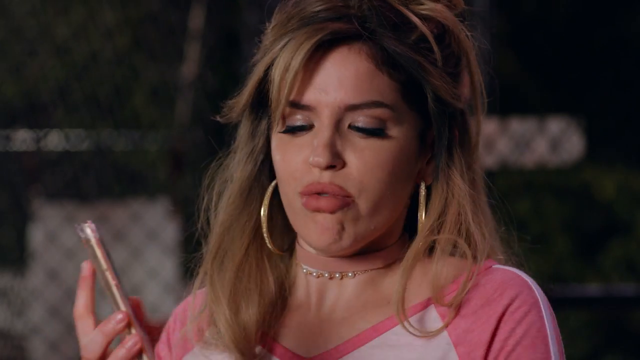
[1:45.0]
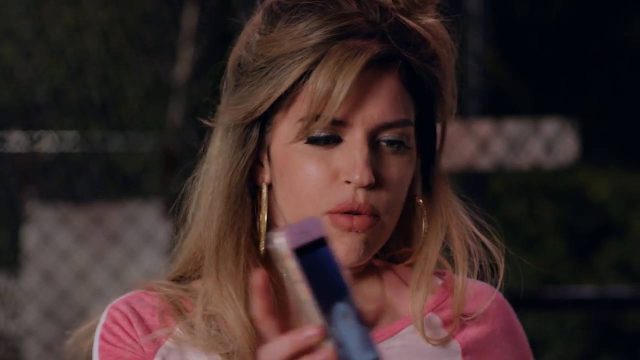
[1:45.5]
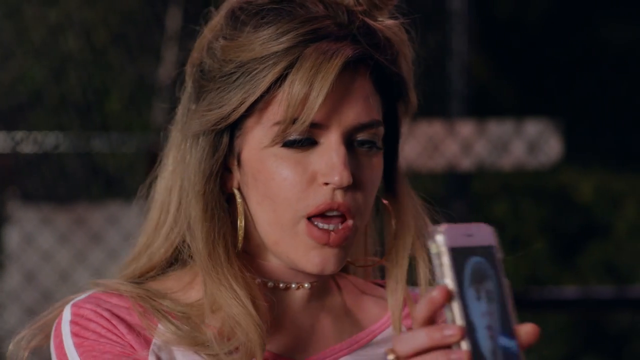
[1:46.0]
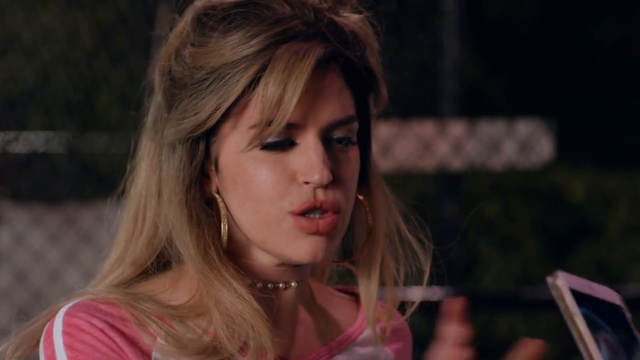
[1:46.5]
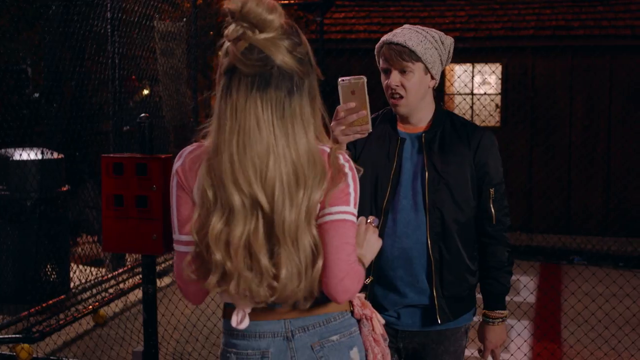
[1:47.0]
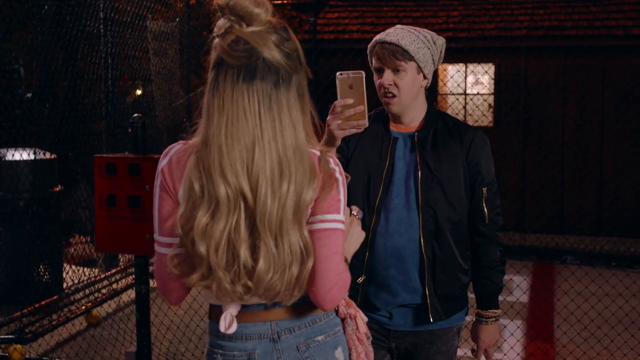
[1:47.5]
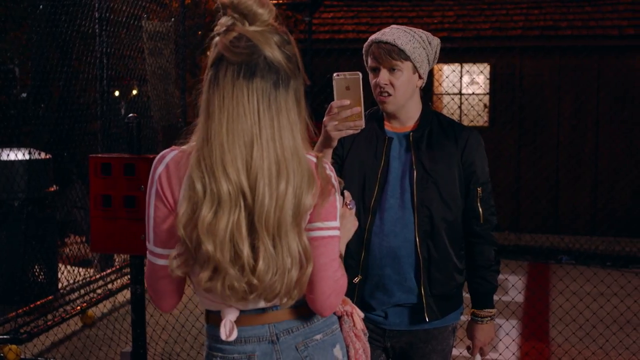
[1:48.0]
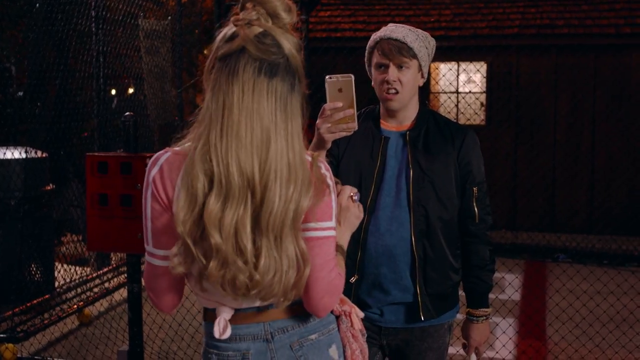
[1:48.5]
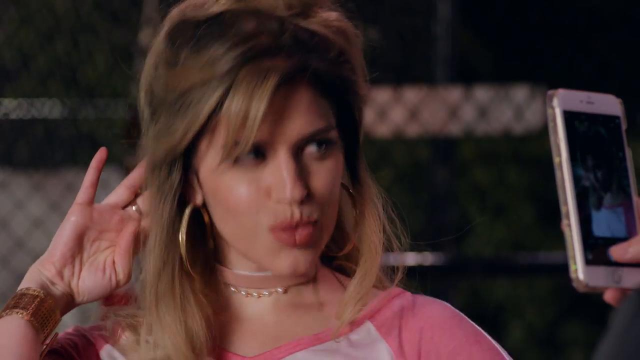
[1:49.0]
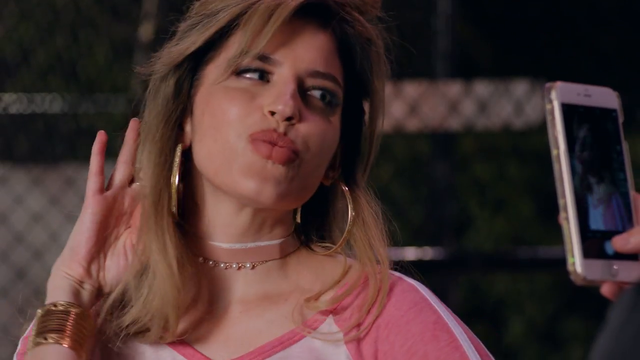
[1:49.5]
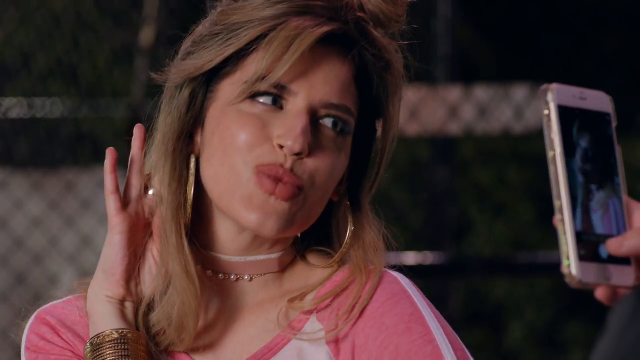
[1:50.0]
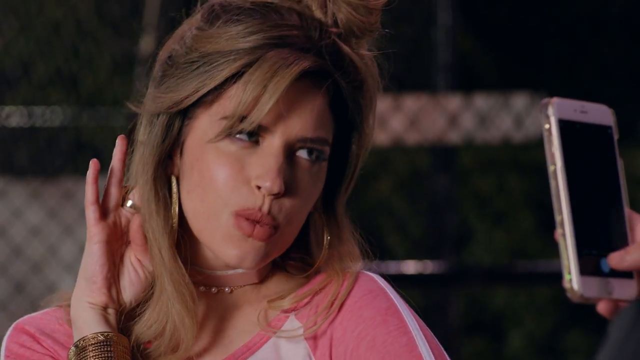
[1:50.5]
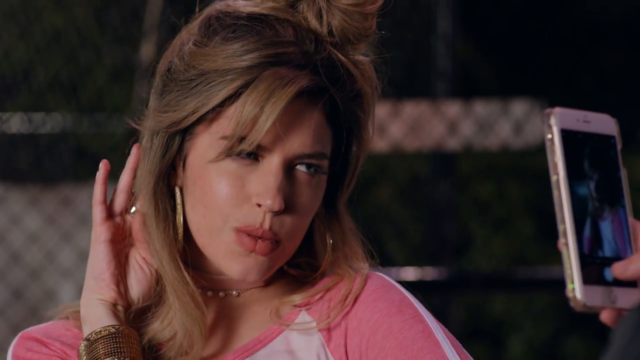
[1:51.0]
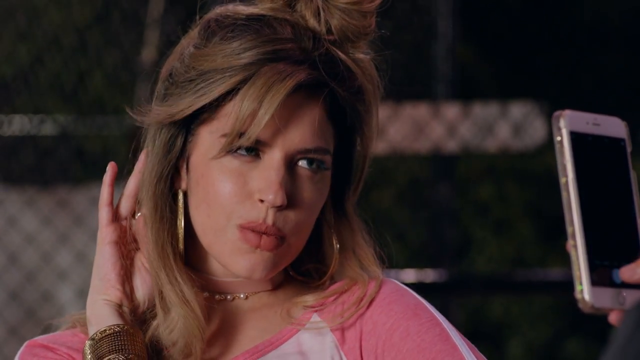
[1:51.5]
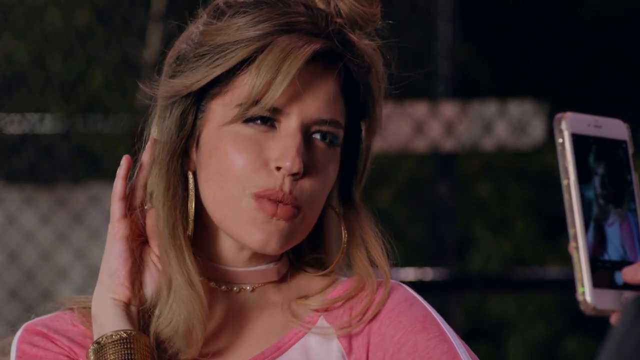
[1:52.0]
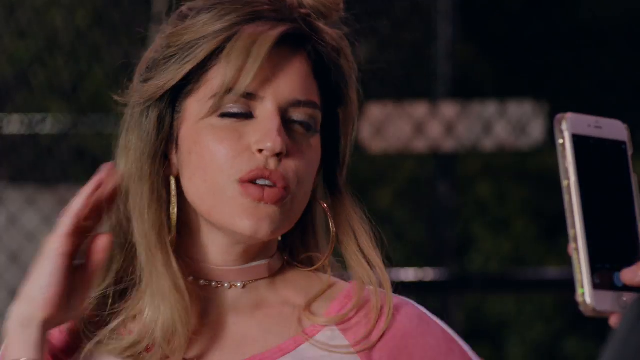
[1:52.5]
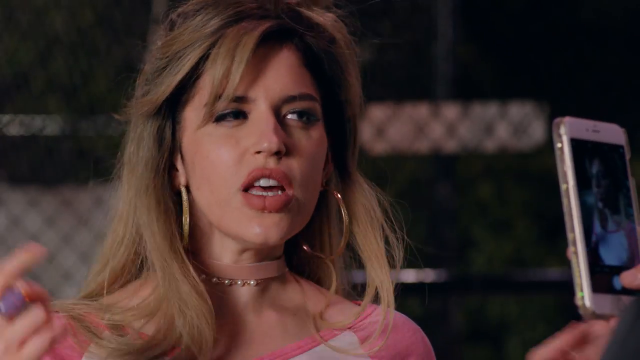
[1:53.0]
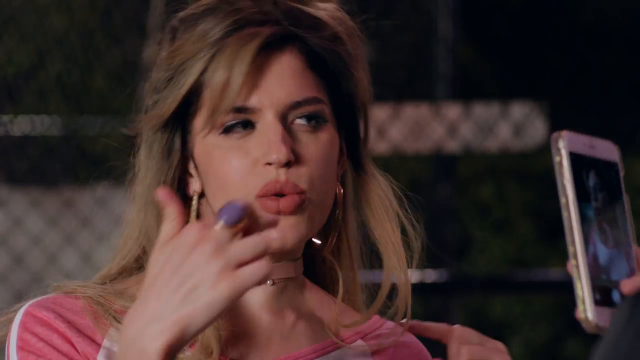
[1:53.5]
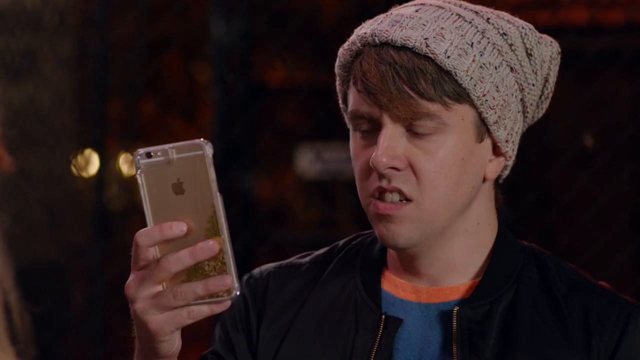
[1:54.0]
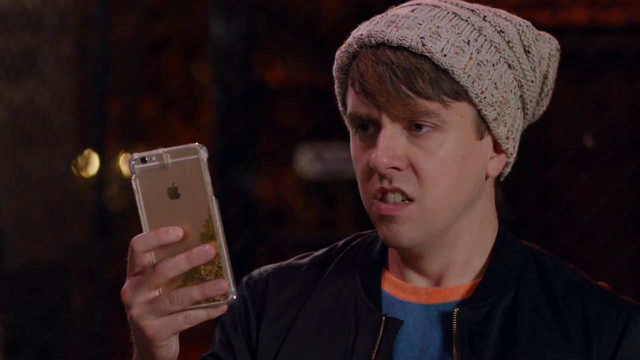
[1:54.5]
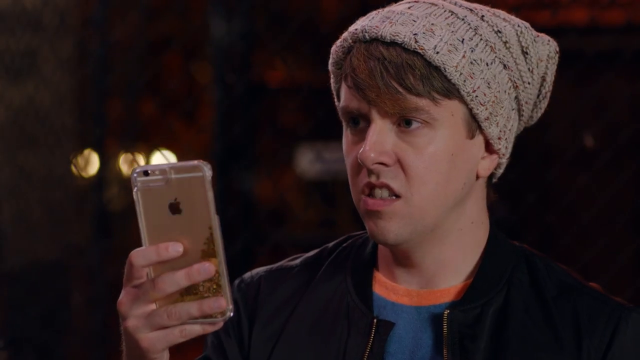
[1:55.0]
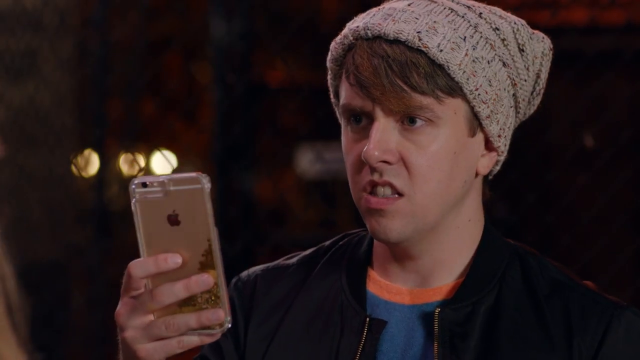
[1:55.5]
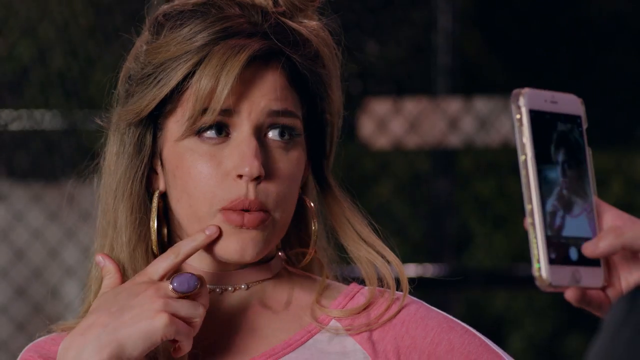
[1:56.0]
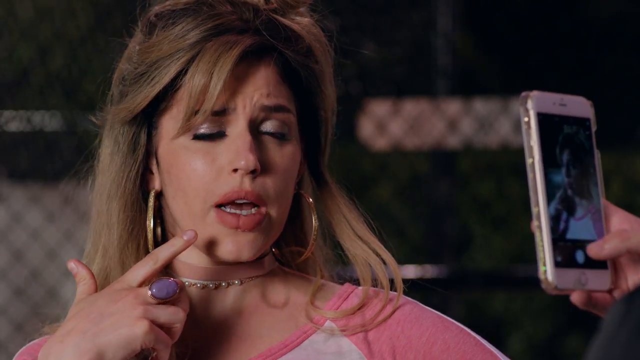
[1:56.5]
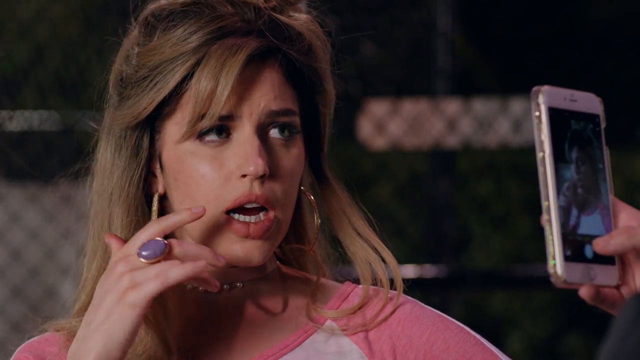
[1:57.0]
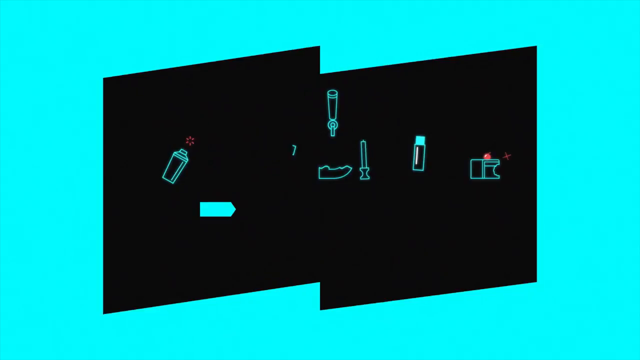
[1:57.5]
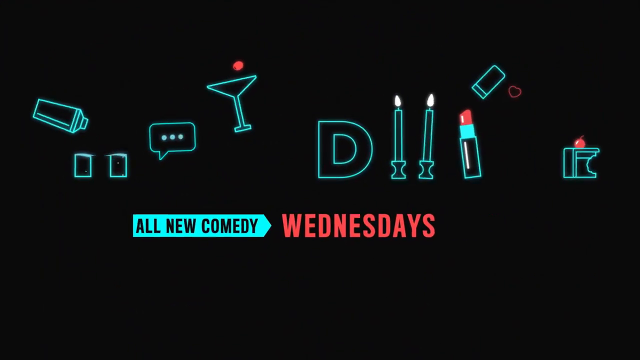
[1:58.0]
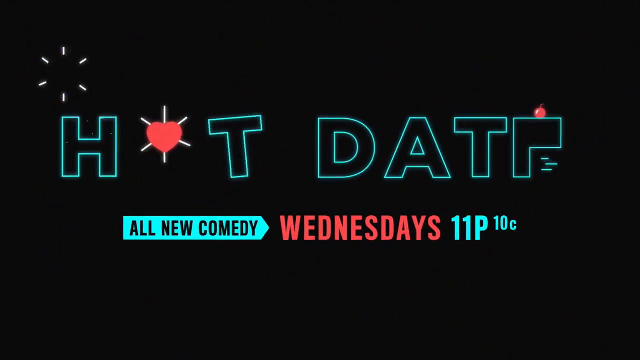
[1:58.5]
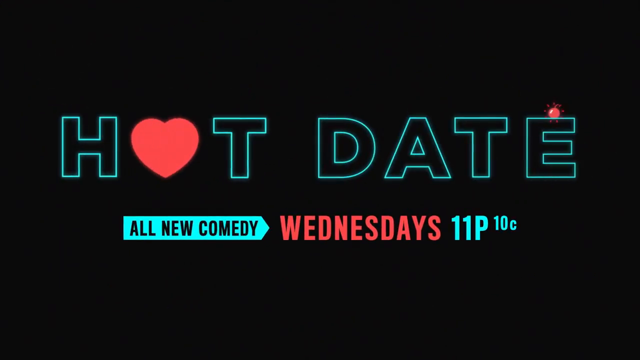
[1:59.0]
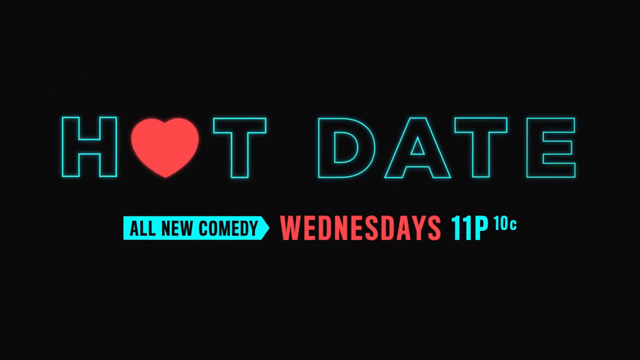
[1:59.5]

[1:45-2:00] A woman with dirty-blonde hair, big hoop earrings and a pearl necklace, wearing a pink sporty top, holds her smartphone and passes it to the man she is standing across from. The camera points at him as he takes the phone and looks at the image on it, seeming a little confused or disgusted at first. He wears a gray winter cap, a bomber jacket and a blue t-shirt with an orange collar. She then poses while he takes pictures of her, sort of directing her; he seems kind of weirded out and does not seem to want to be in this position. The shot cuts back to her as she continues to pose, saying something to him about a particular way she wants it shot.